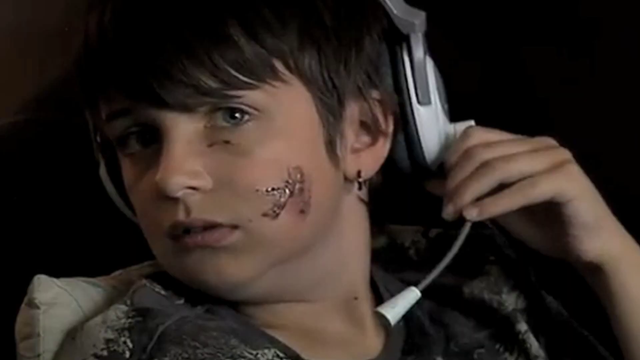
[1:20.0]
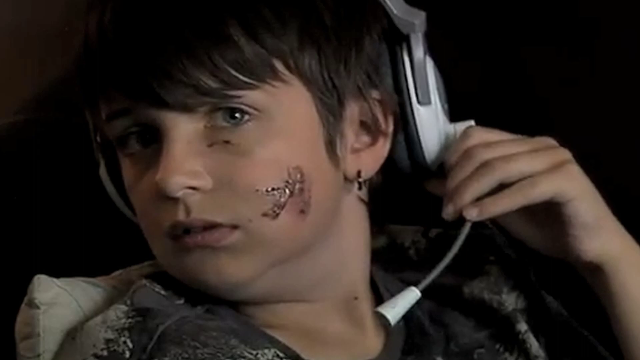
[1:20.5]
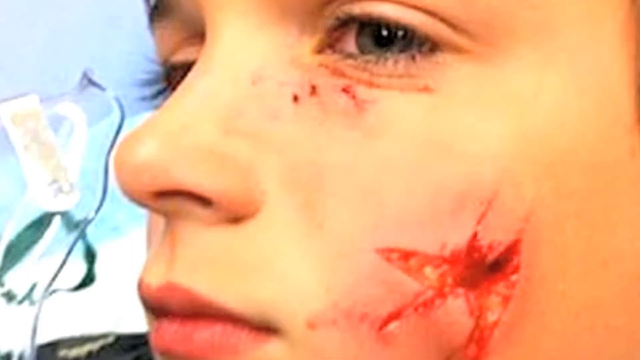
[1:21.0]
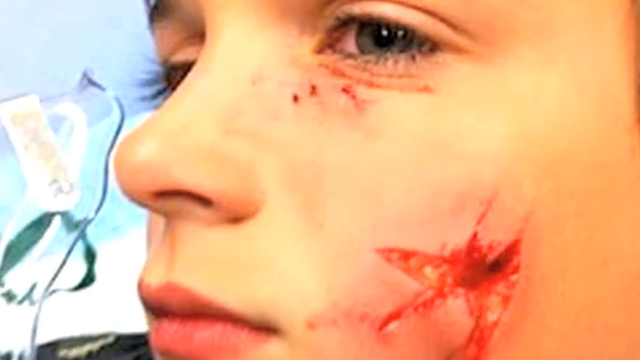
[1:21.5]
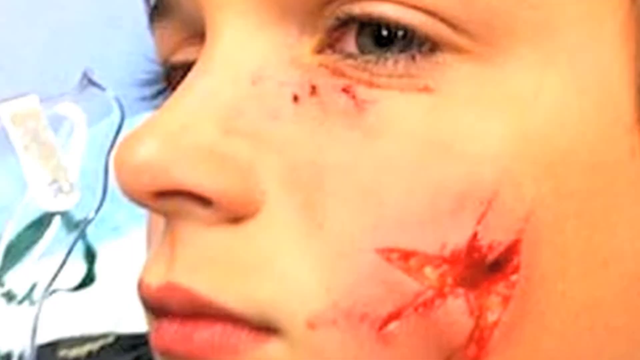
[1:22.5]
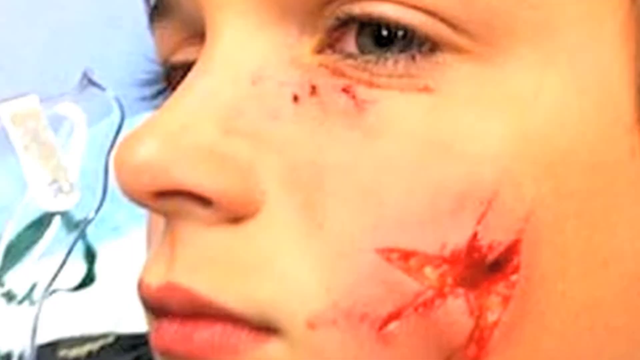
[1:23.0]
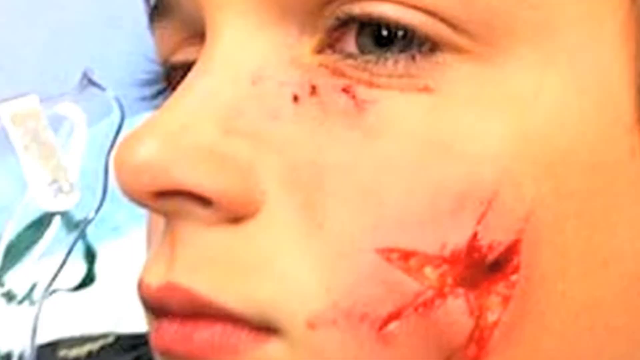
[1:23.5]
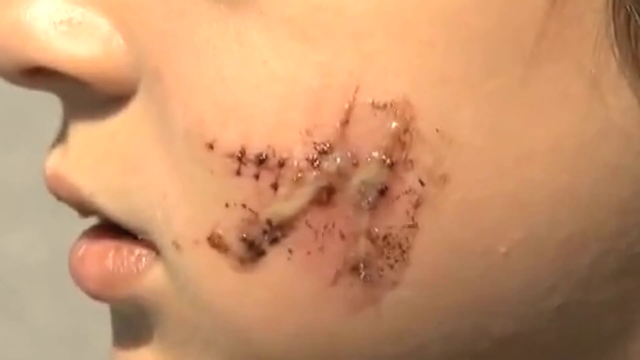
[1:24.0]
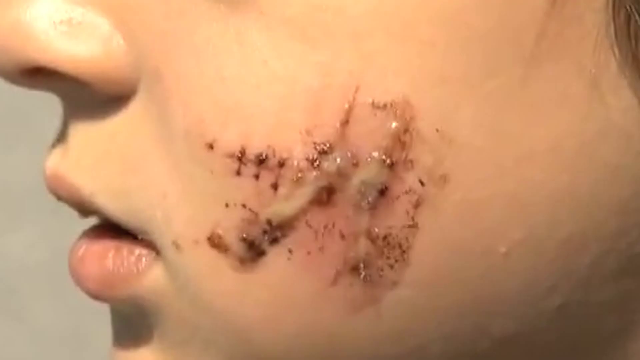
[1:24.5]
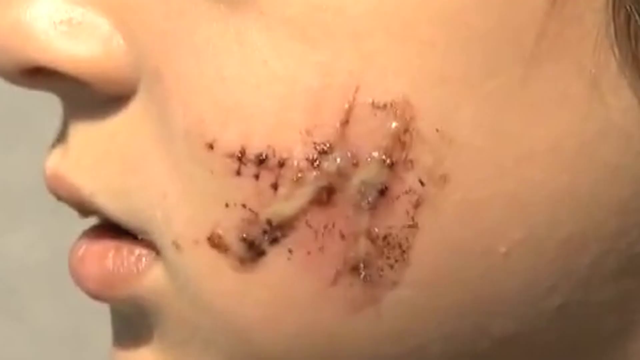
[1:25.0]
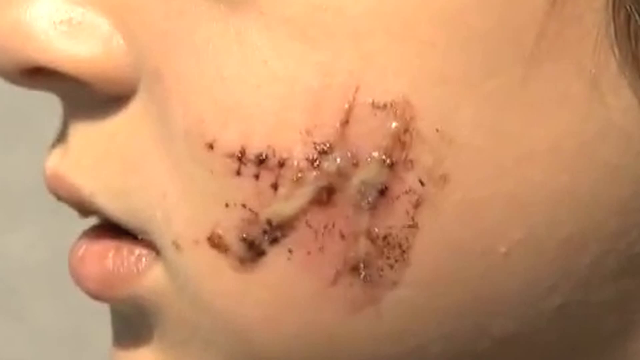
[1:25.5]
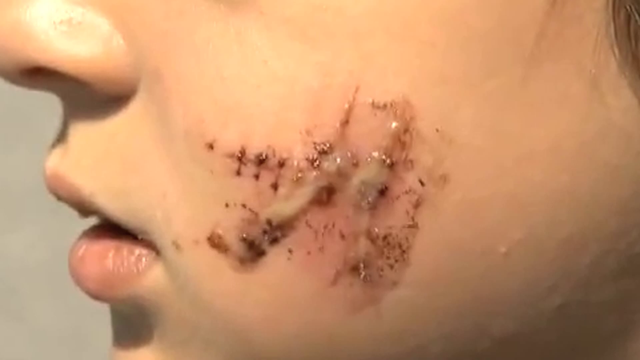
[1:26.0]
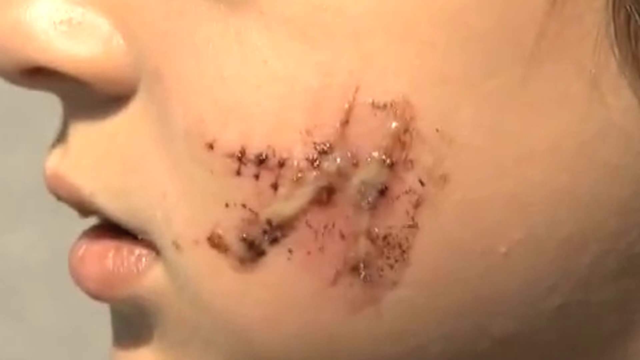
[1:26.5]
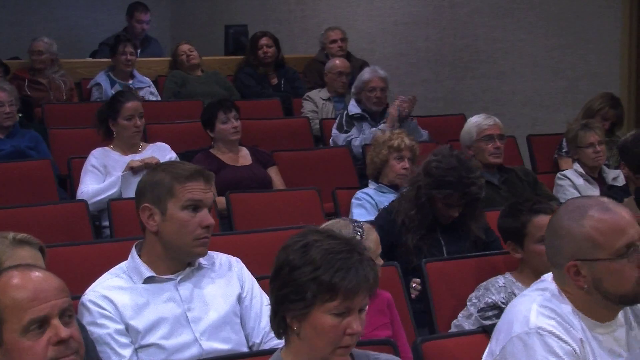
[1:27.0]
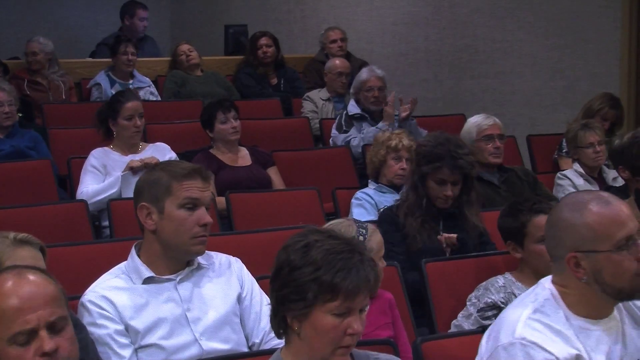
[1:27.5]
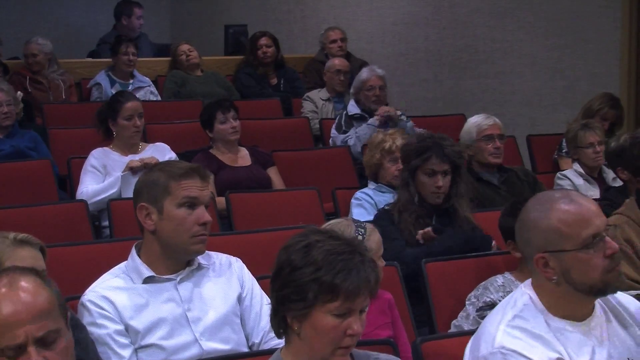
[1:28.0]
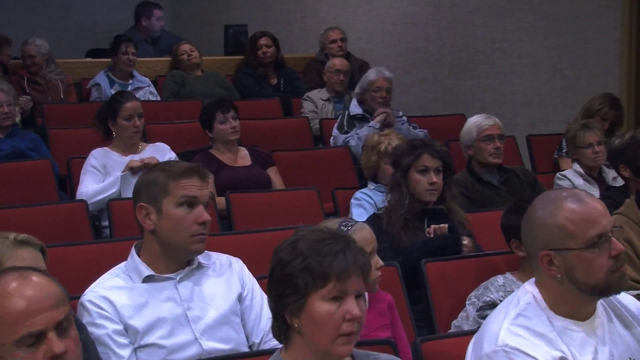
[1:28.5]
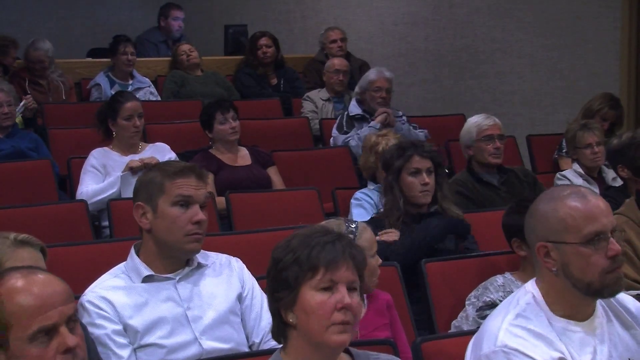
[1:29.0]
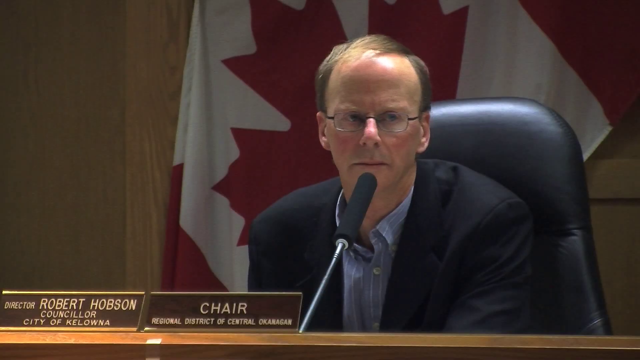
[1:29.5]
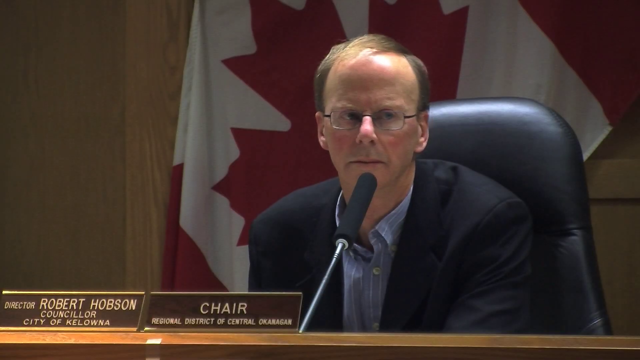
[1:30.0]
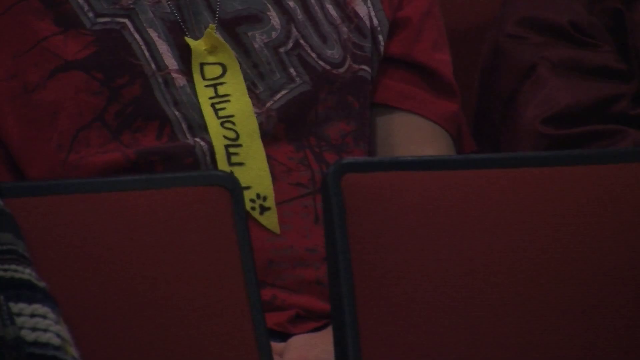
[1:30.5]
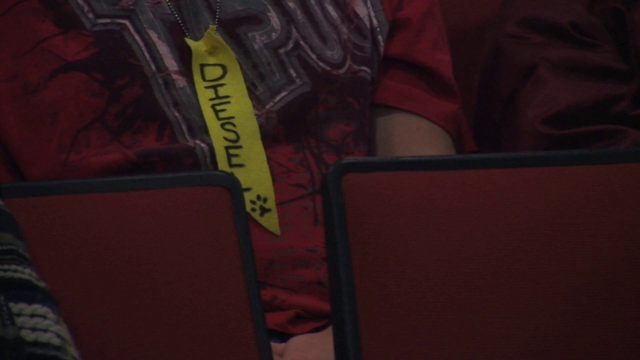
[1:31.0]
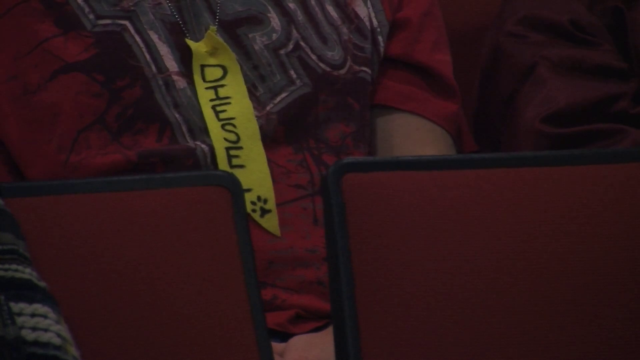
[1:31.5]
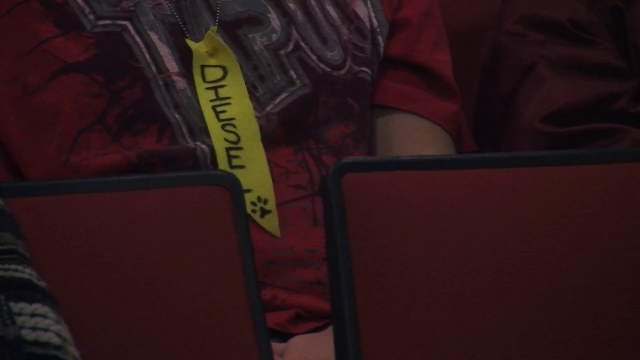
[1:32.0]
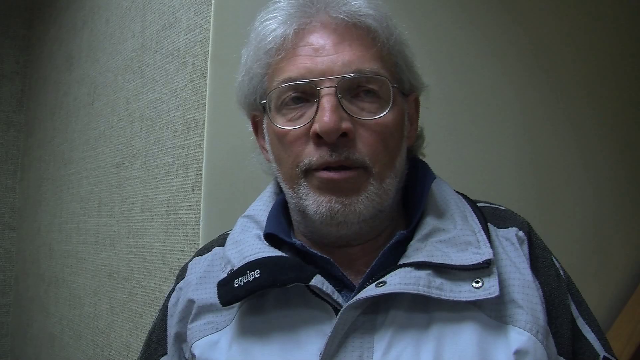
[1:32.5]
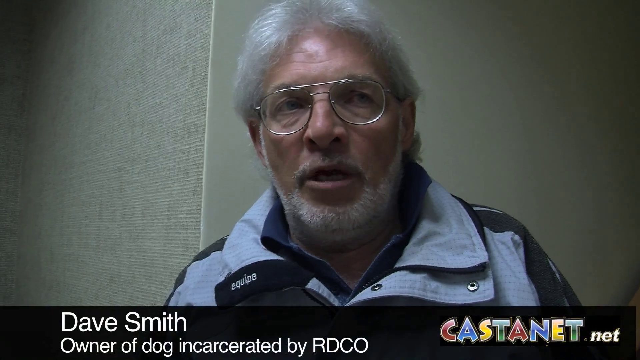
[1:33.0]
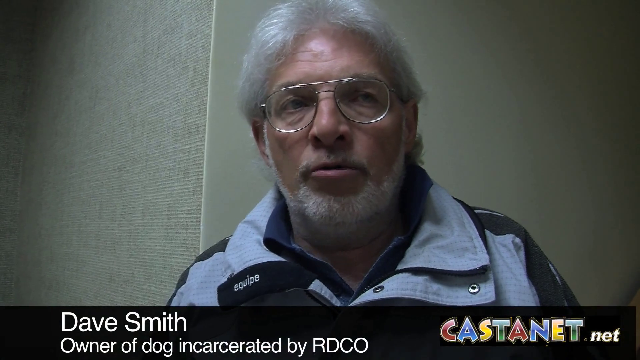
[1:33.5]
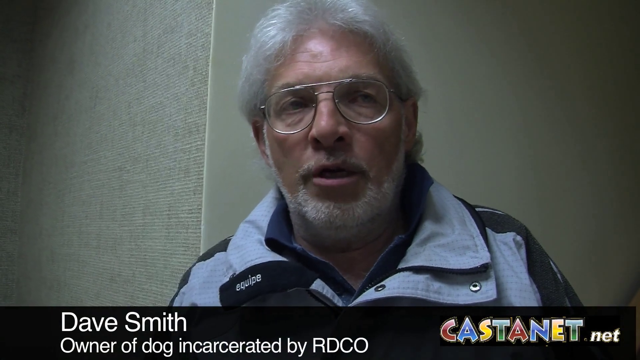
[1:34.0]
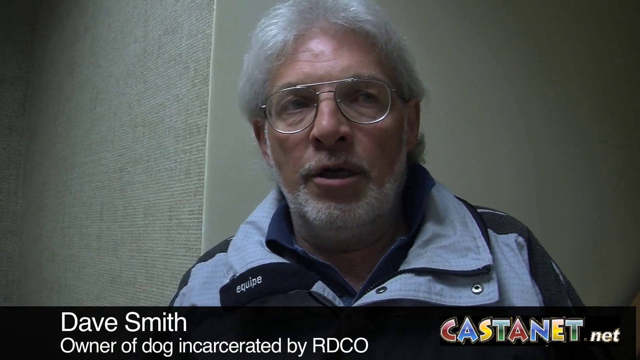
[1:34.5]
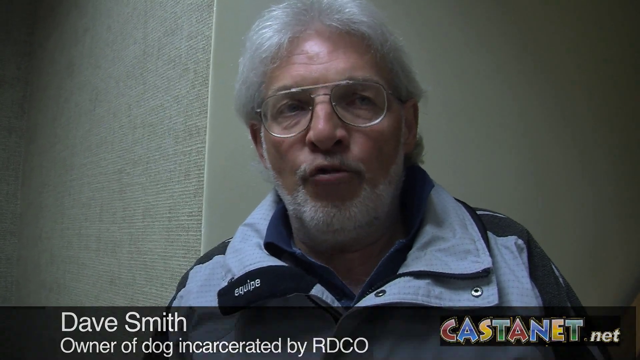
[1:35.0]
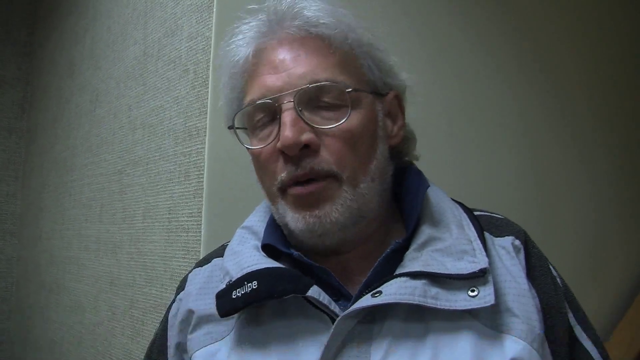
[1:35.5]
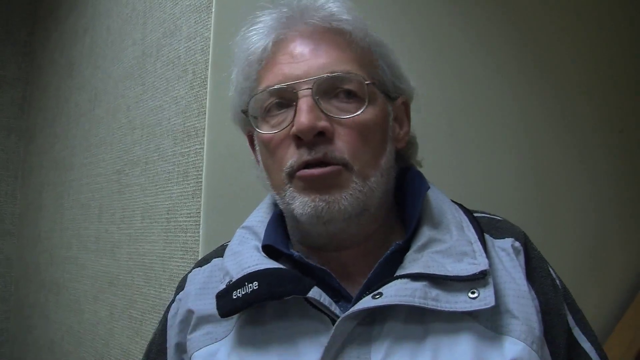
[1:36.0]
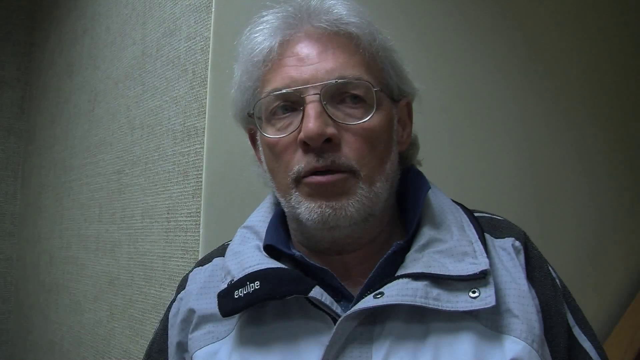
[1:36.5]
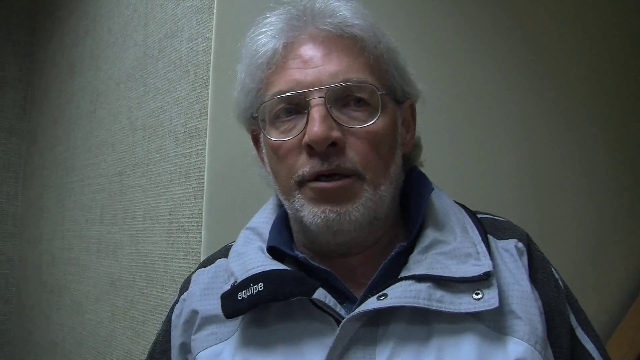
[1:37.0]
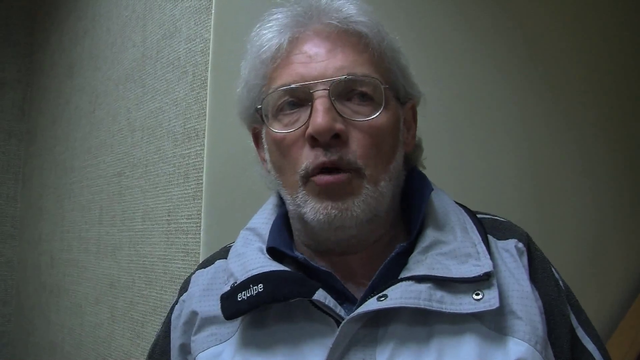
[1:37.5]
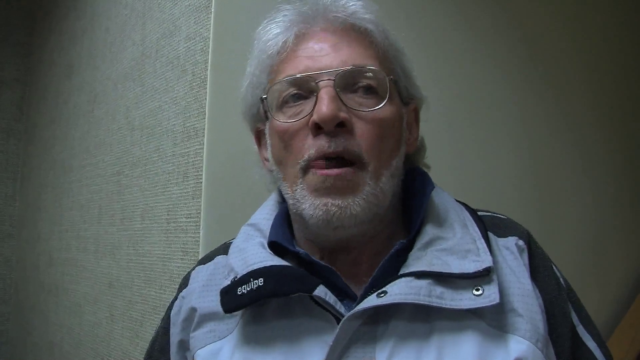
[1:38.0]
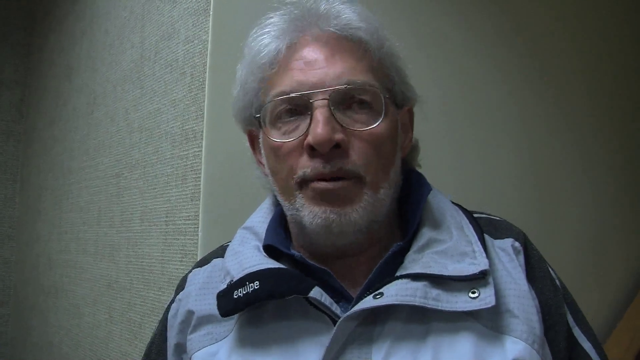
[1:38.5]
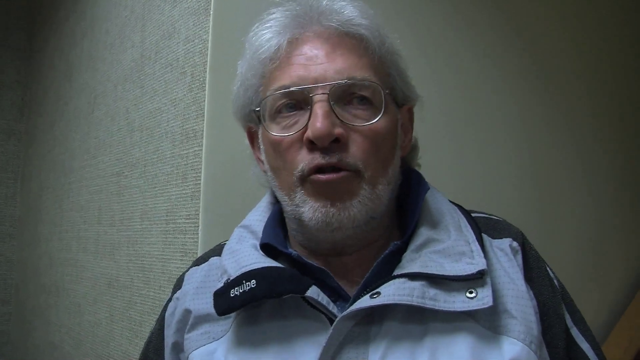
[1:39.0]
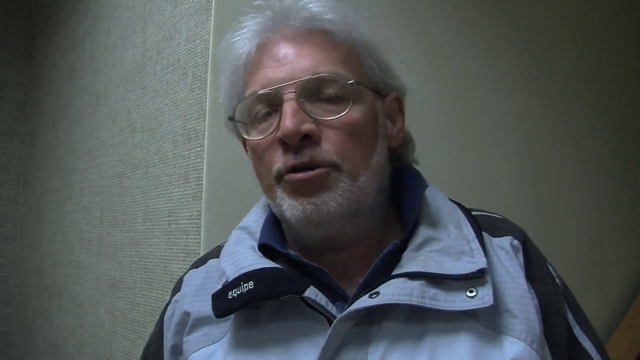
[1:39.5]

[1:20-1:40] Multiple pictures show individuals with dog bites on their cheeks. Dave Smith, the owner of a dog incarcerated by RDCO, is interviewed. He looks concerned and worried, and he is apparently being questioned about his dog's behaviour.